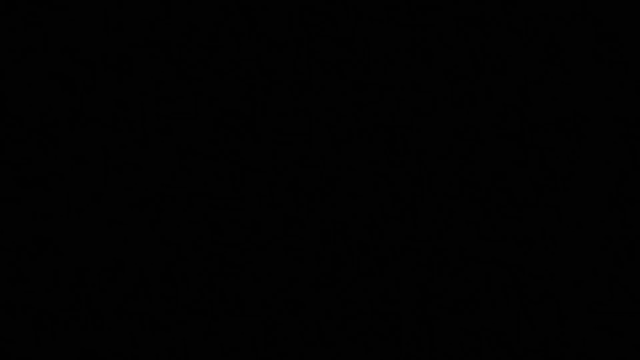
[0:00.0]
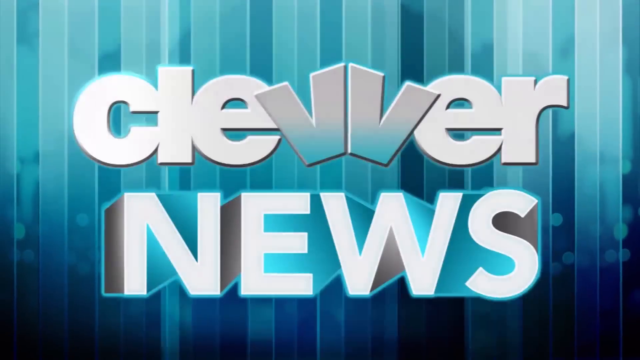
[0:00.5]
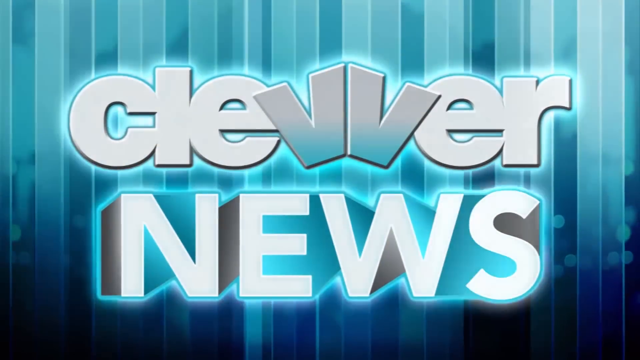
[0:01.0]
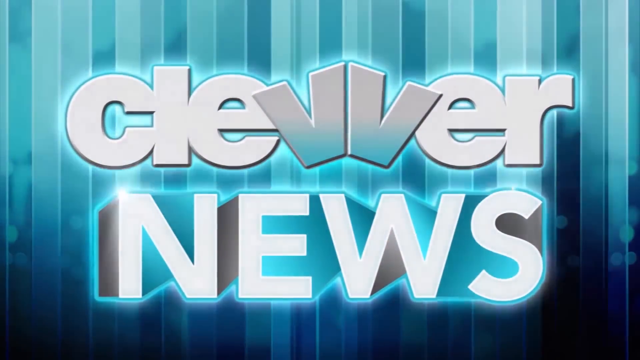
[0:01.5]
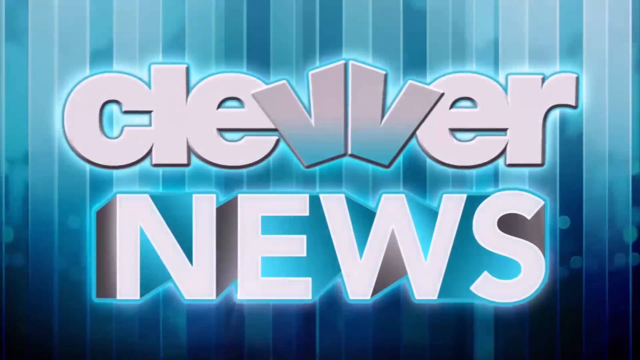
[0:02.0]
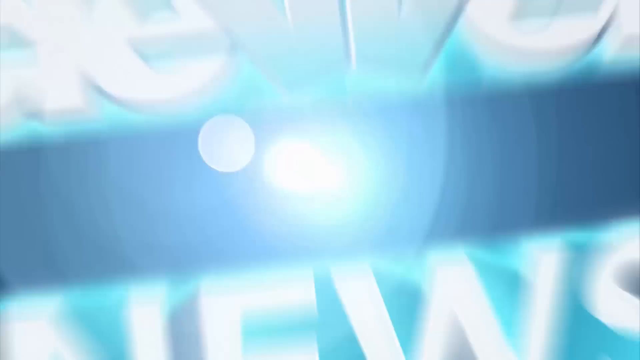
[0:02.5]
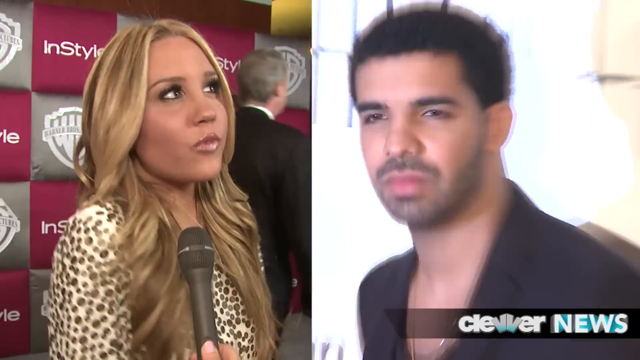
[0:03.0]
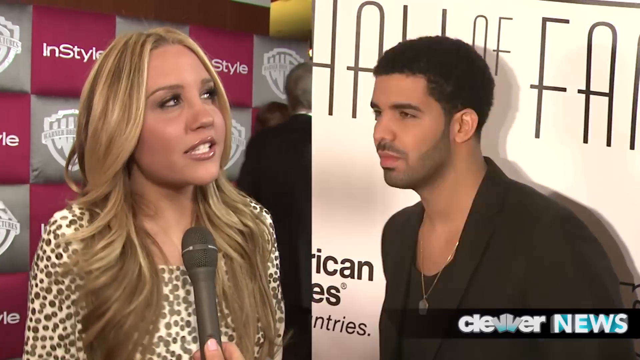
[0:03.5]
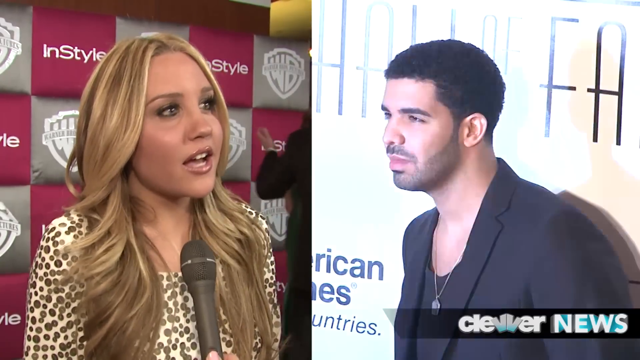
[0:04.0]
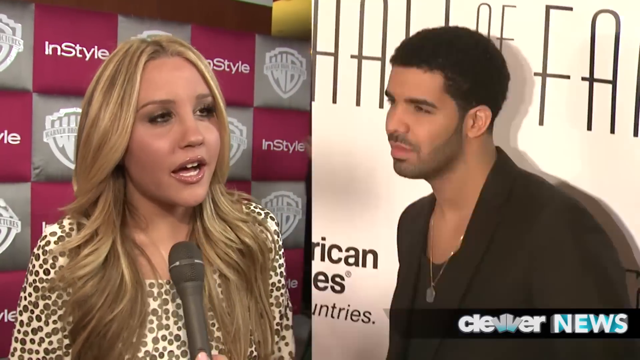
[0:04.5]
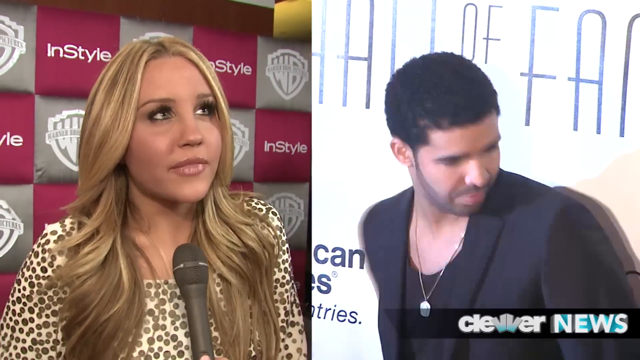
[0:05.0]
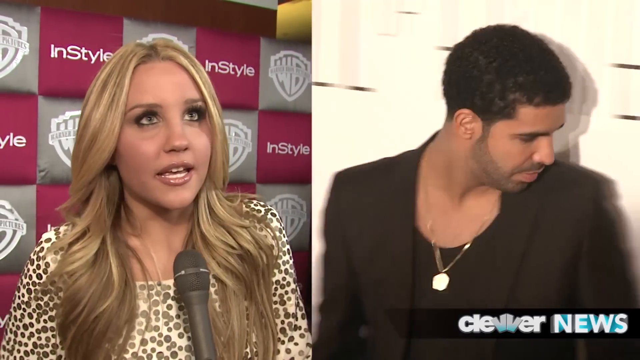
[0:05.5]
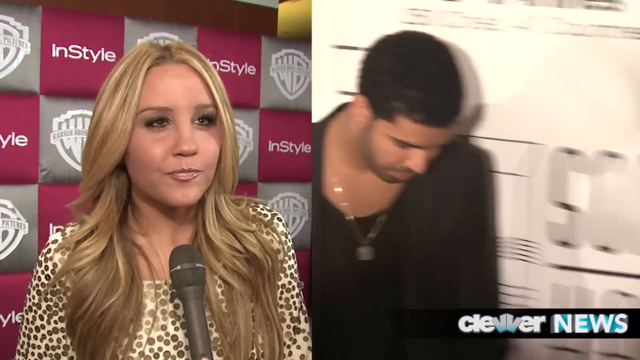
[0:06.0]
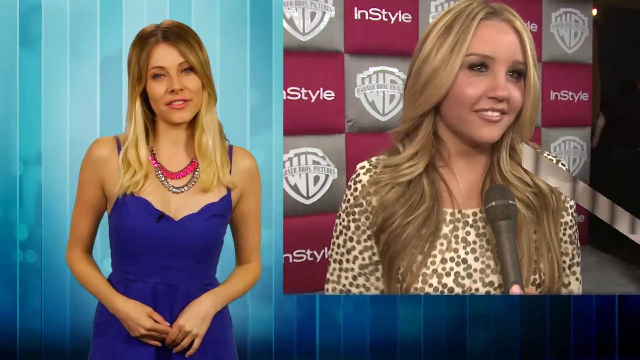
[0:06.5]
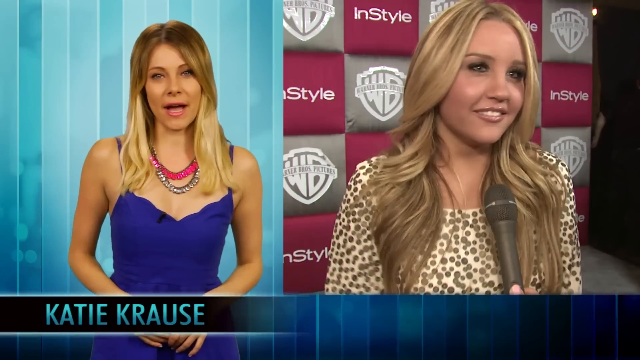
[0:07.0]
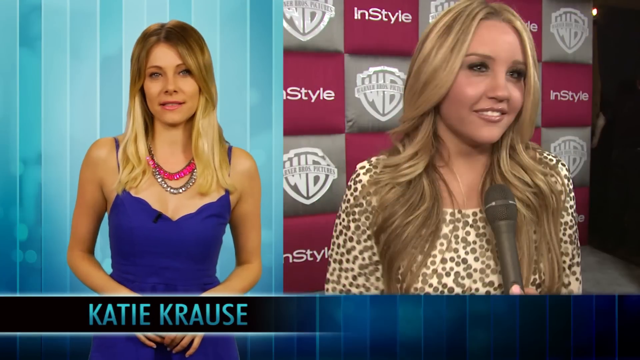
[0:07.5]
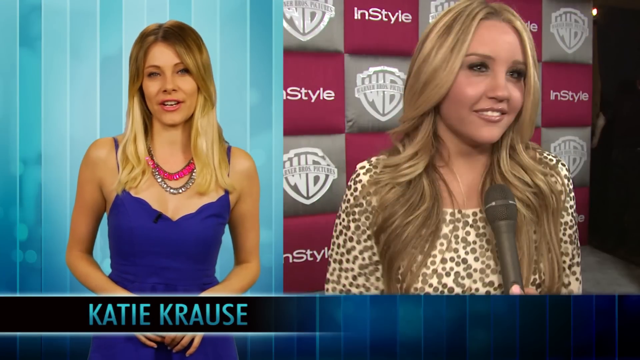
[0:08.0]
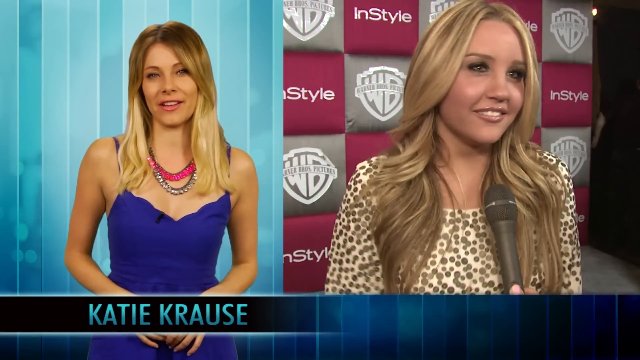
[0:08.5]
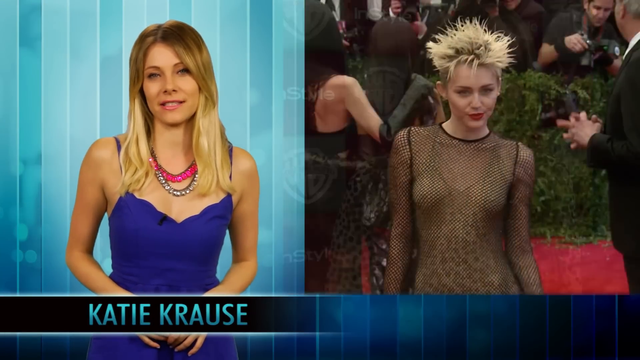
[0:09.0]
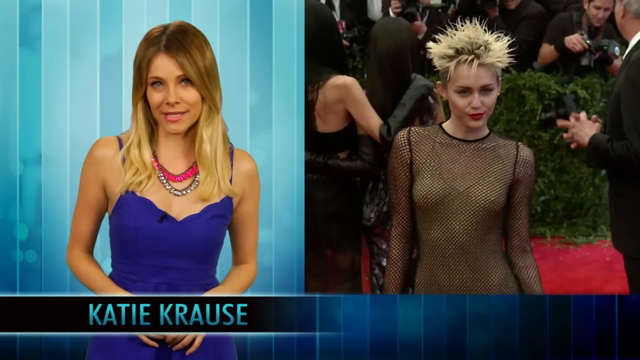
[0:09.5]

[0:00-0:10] The on-screen text reads "Clever News." Some celebrities appear, including Amanda Bynes and Drake; they are talking and getting their pictures taken. Katie Krause is reporting.